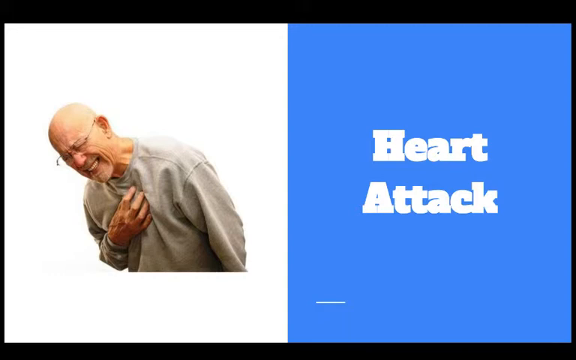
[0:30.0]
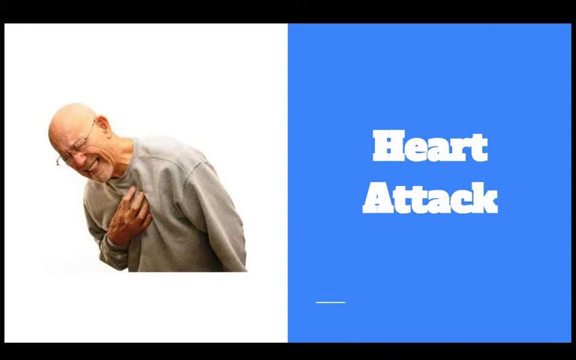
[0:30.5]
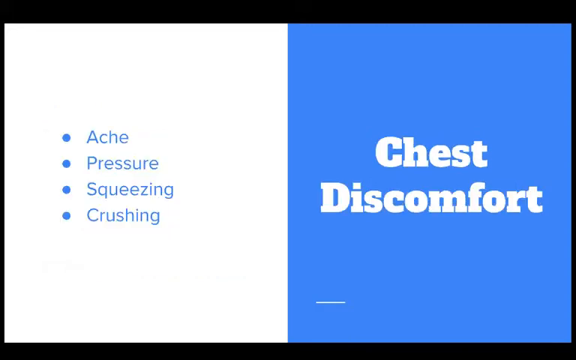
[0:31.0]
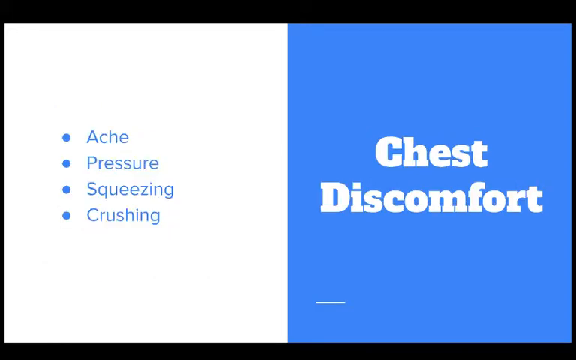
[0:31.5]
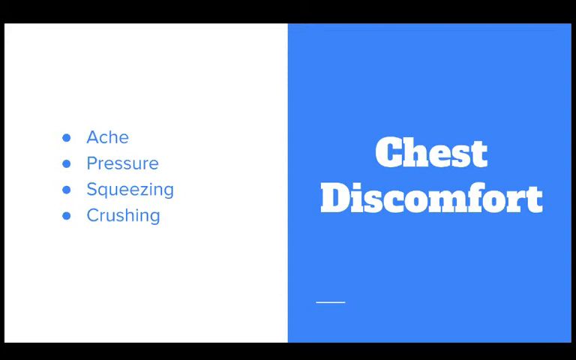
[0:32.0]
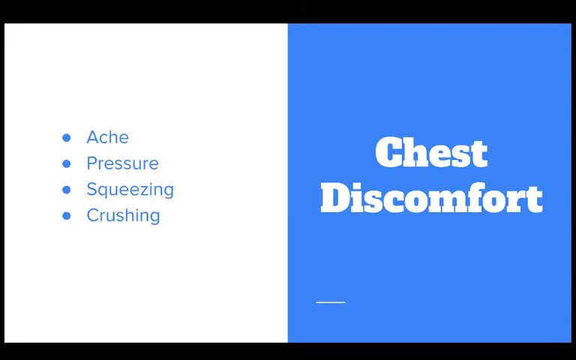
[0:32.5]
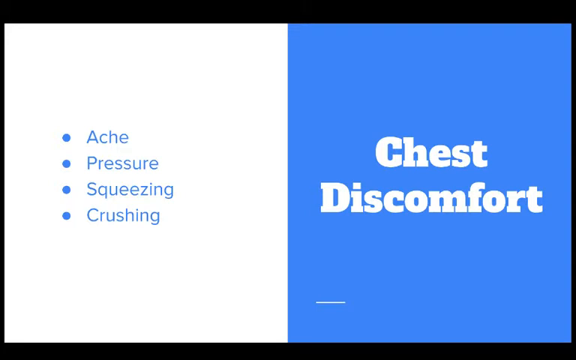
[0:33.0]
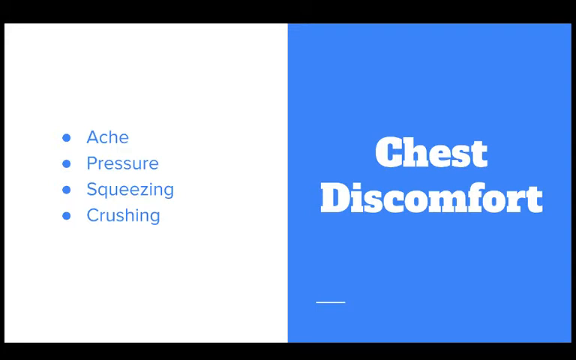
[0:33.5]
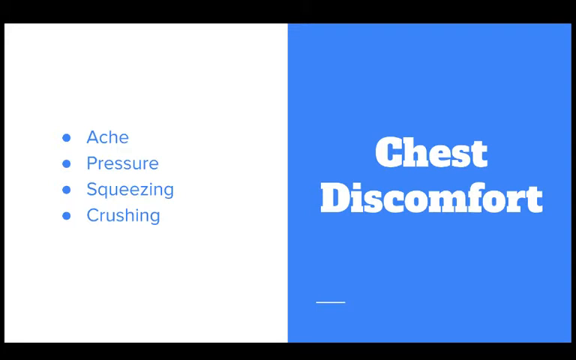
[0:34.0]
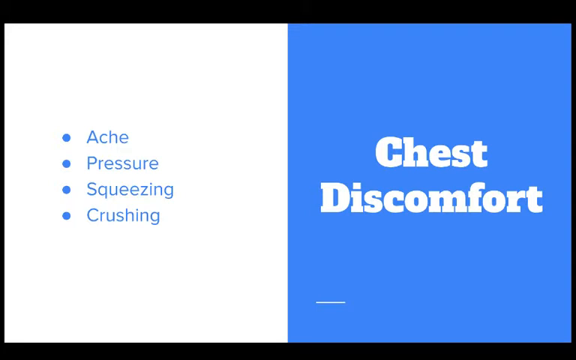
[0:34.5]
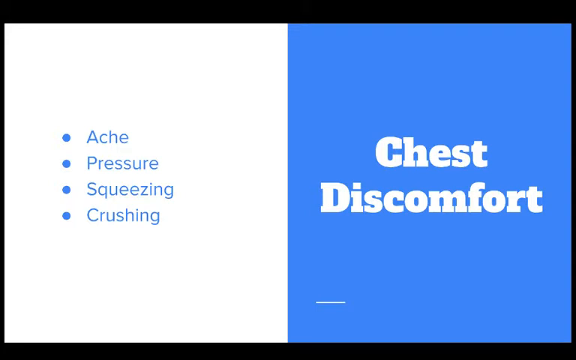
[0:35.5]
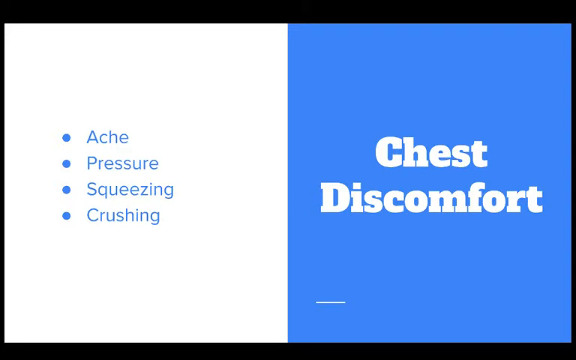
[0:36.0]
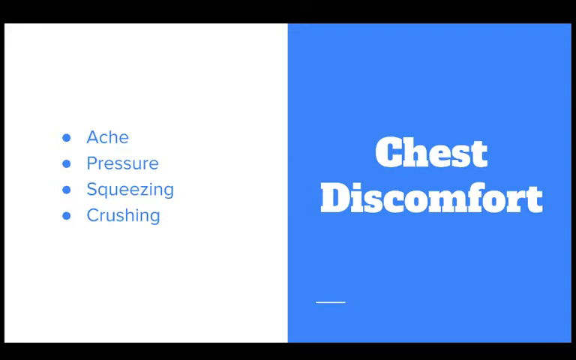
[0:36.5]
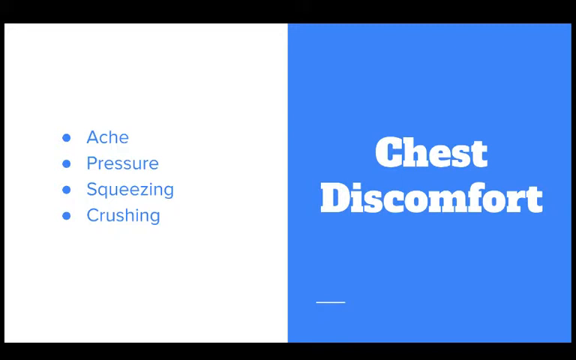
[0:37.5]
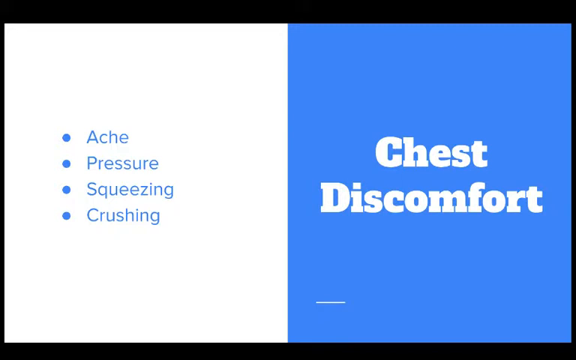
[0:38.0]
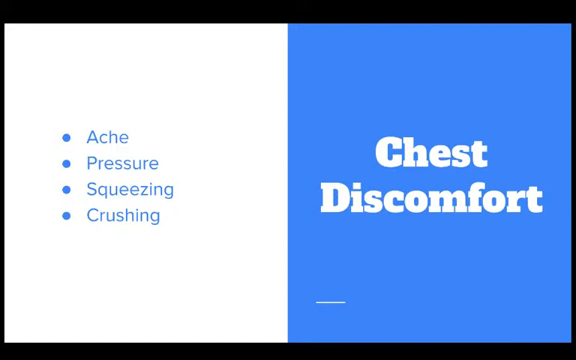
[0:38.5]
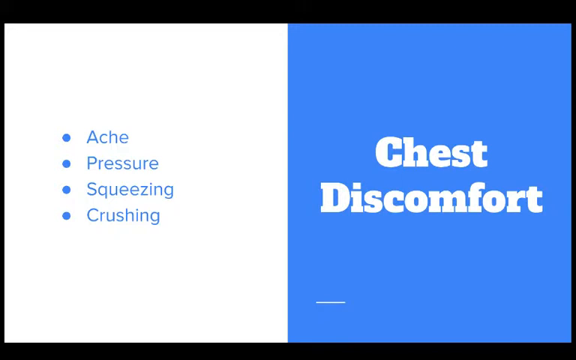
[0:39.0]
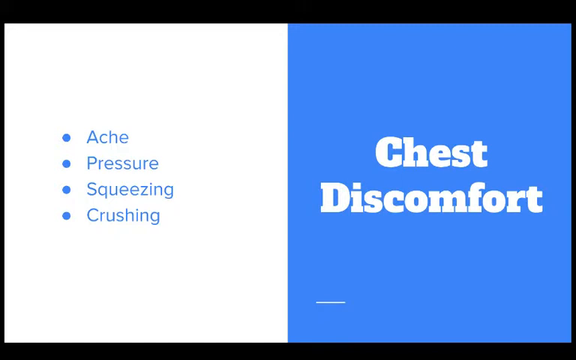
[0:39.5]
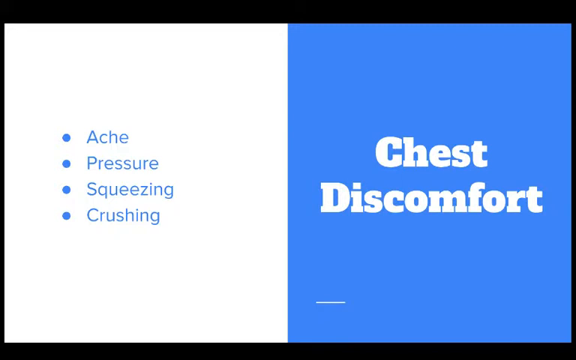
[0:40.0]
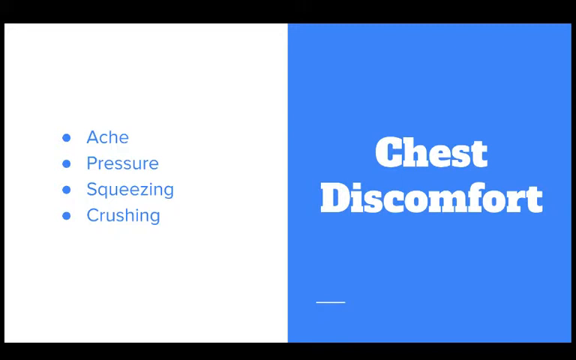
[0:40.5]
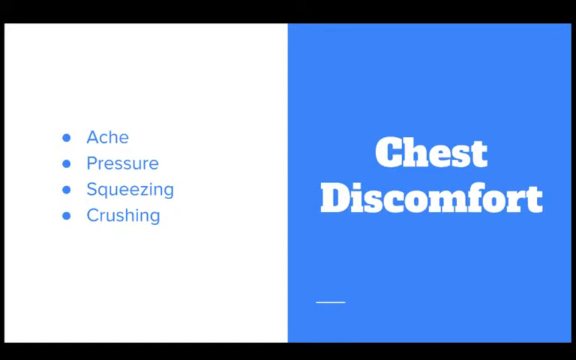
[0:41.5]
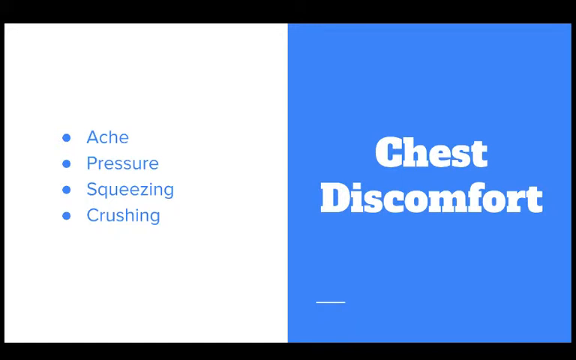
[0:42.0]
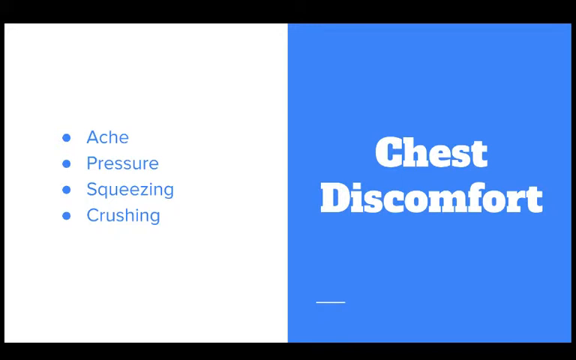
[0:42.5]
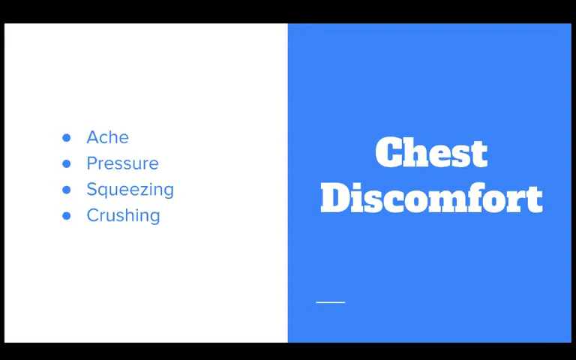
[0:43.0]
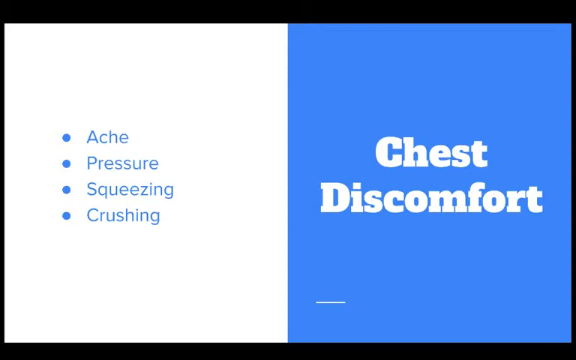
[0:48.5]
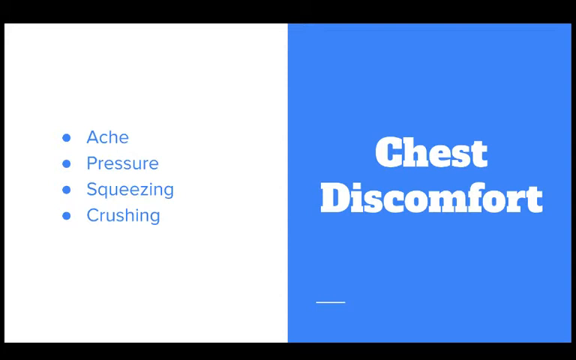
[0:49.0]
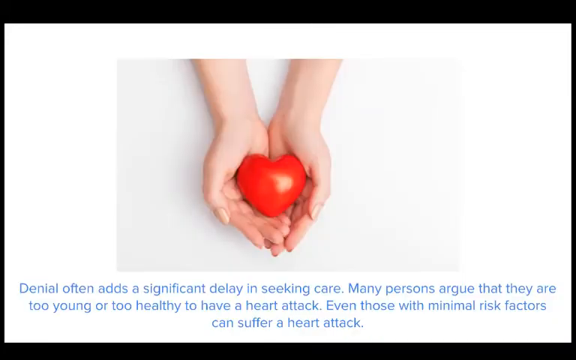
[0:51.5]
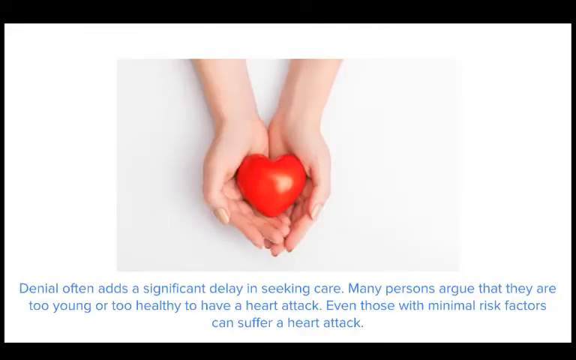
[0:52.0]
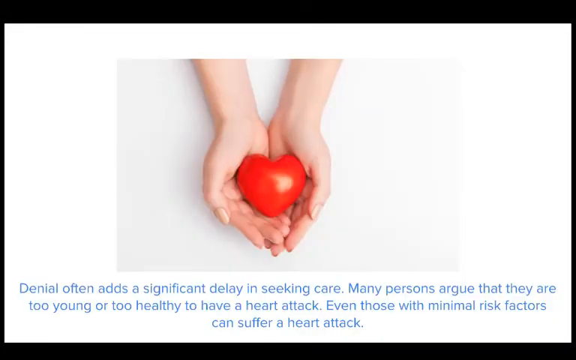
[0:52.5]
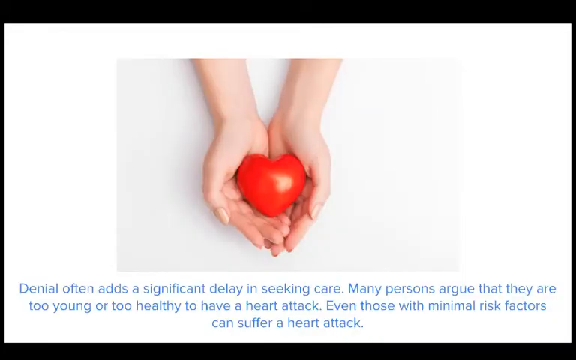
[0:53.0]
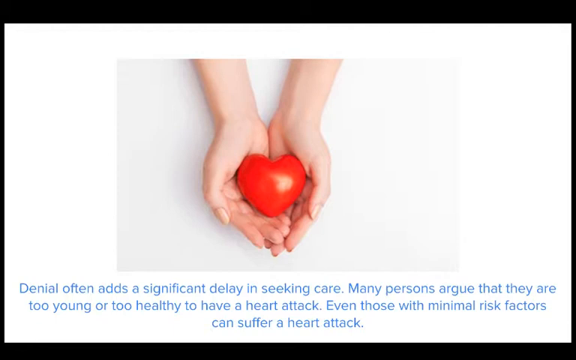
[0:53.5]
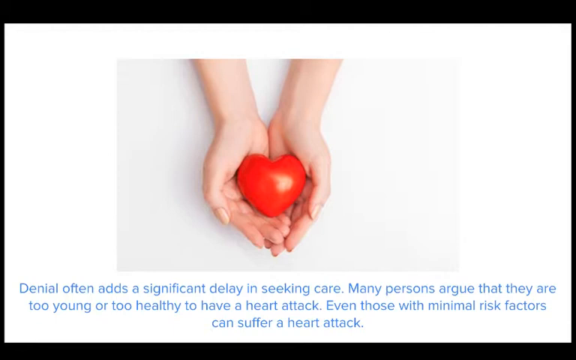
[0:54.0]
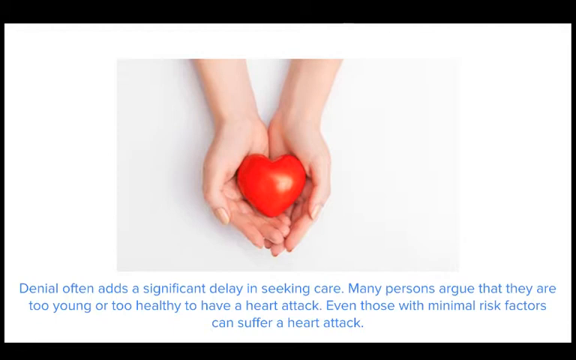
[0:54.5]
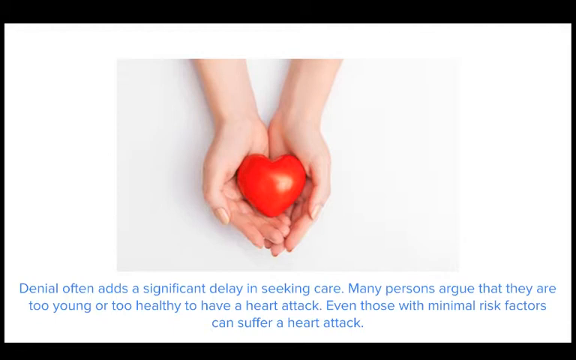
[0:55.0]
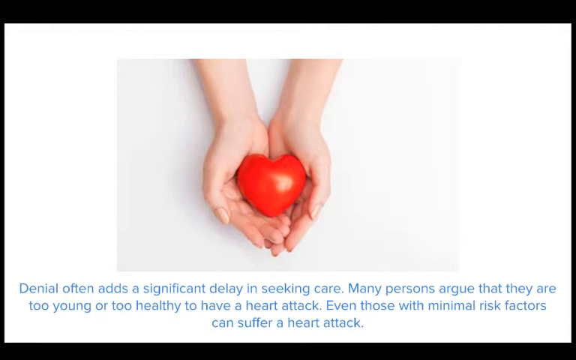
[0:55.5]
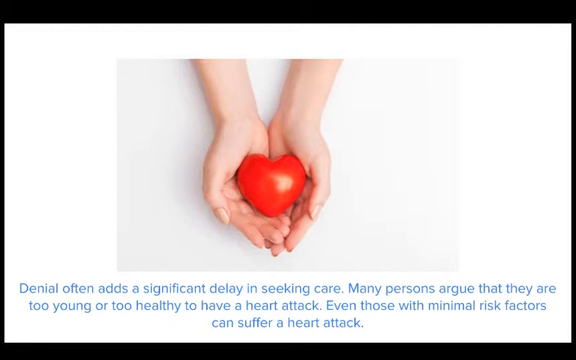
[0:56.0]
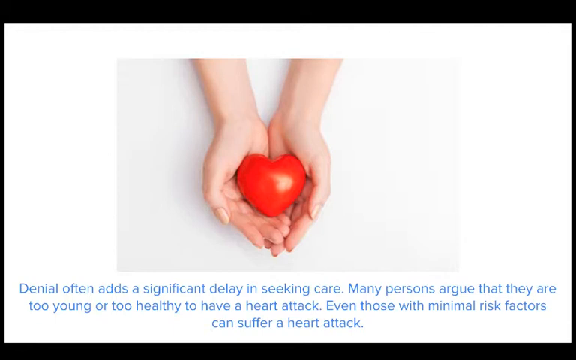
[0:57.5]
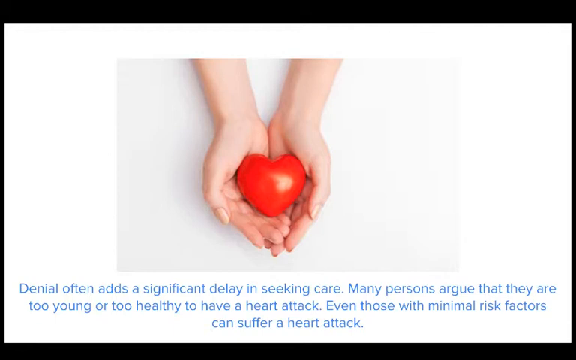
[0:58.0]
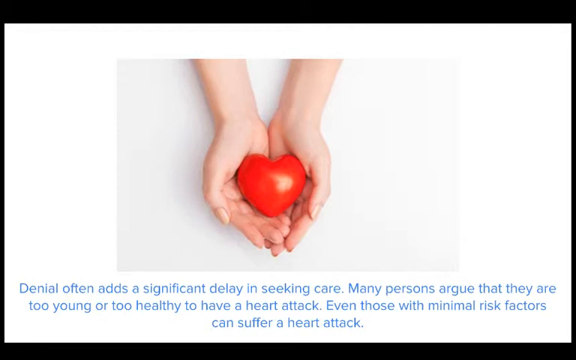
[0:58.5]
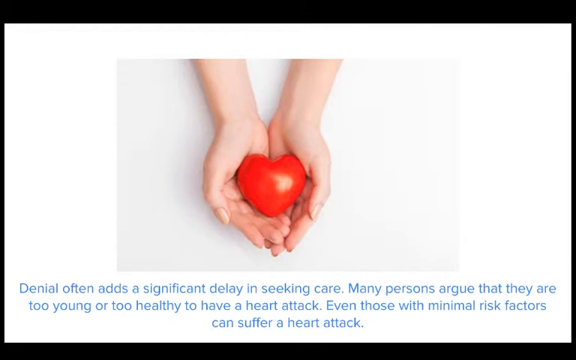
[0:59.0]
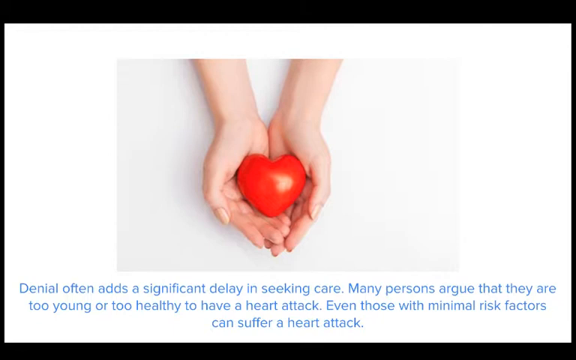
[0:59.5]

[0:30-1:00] The vertical split screen shows an elderly man in a grey jumper on a white background on the left, holding his right hand over his chest and grimacing in pain, and white text saying "heart attack" on a light blue background on the right. The video transitions to a new screen with the same background and split-screen effect. On the left are four bullet points in light blue text: "ache", "pressure", "squeezing" and "crushing". On the right, white text reads "chest discomfort". Next comes a white screen with two hands and the top of the forearms extending from the top section of the screen down to the middle. The hands are cupped together, with nails painted a light brown colour, almost a sandy gold, and they cup a red love heart. Blue text at the bottom of the screen reads: "denial often adds a significant delay in seeking care. Many persons argue that they are too young or too healthy to have a heart attack. Even those with minimal risk factors can suffer a heart attack."